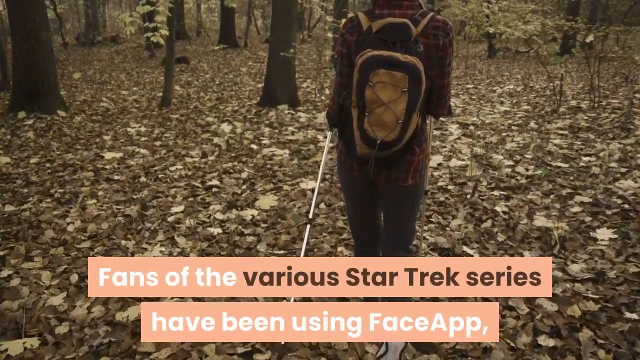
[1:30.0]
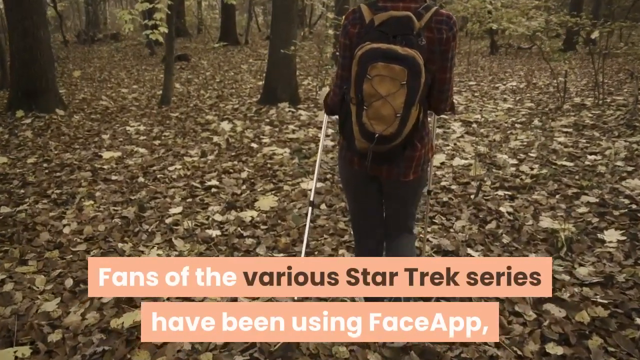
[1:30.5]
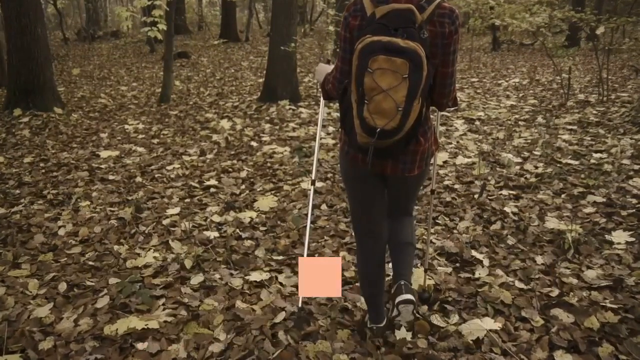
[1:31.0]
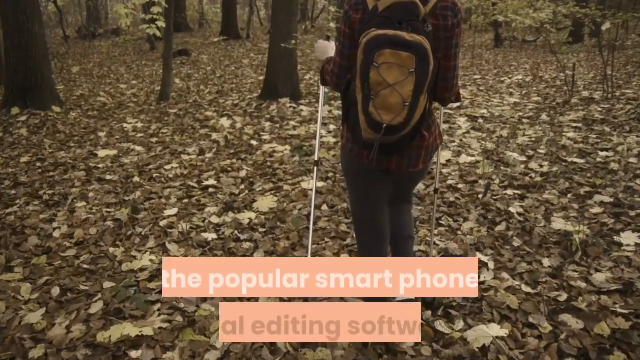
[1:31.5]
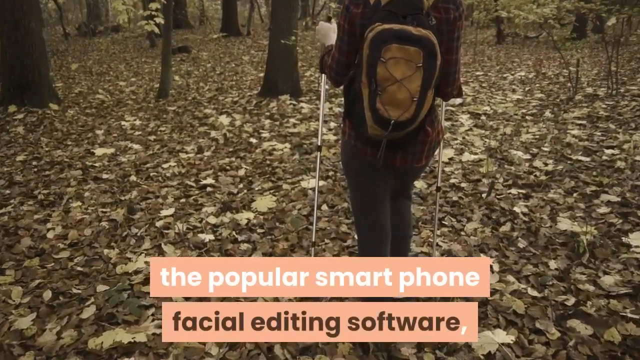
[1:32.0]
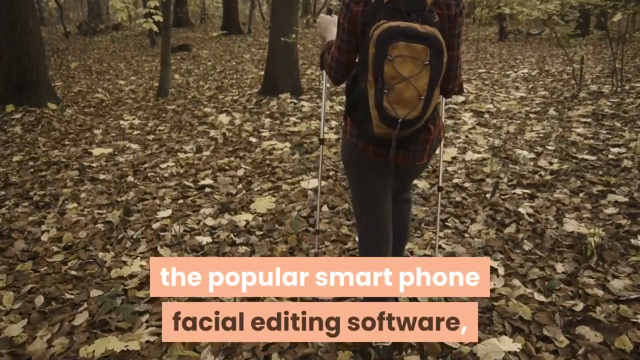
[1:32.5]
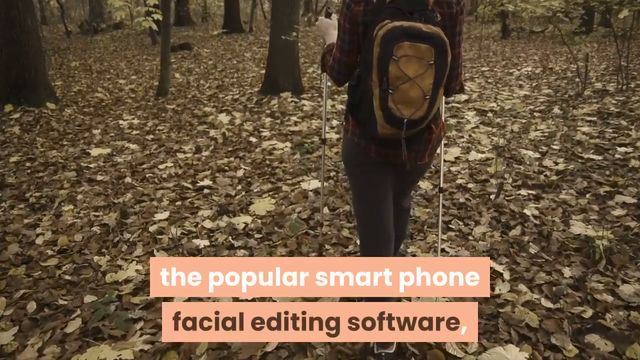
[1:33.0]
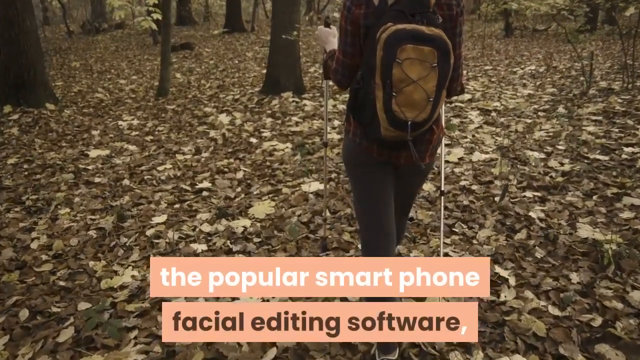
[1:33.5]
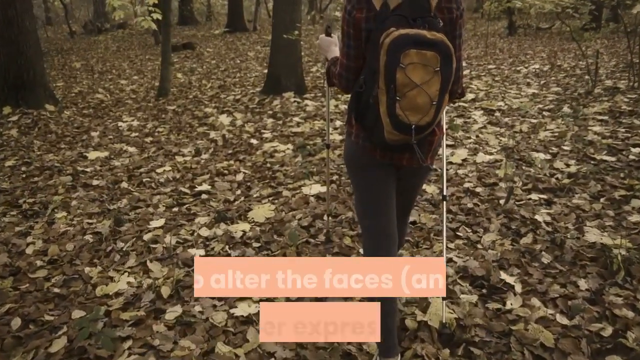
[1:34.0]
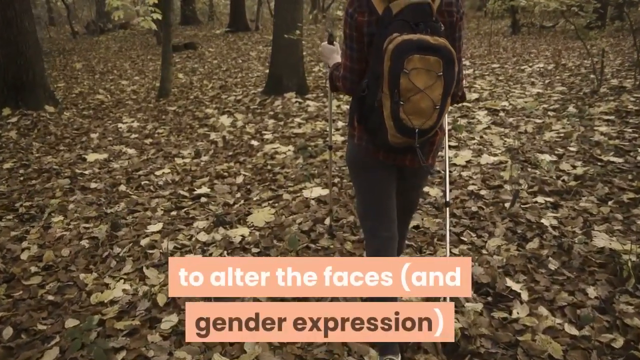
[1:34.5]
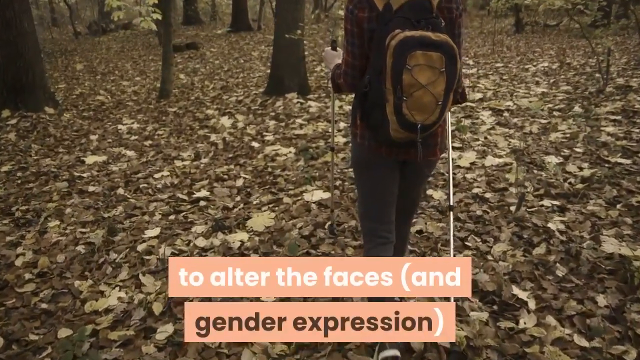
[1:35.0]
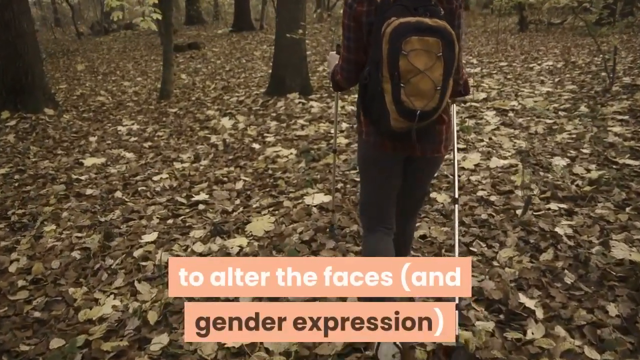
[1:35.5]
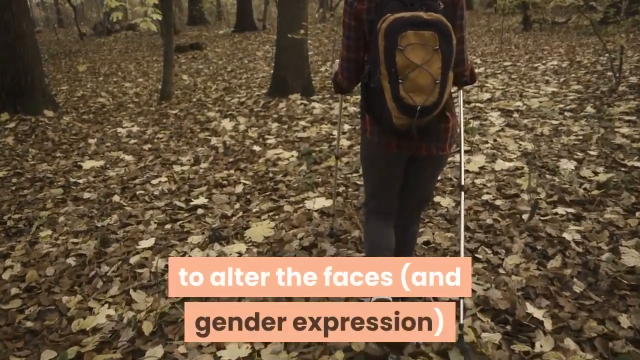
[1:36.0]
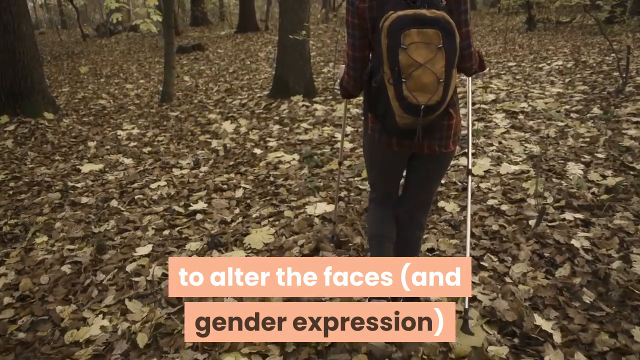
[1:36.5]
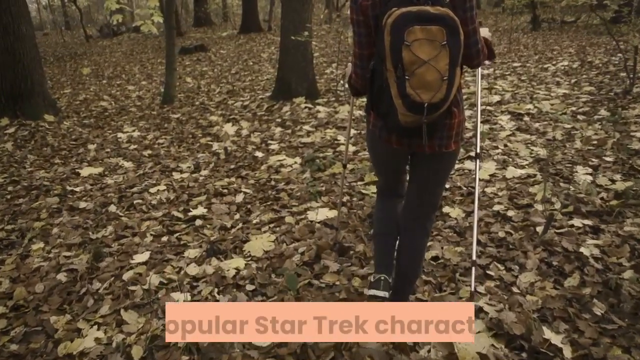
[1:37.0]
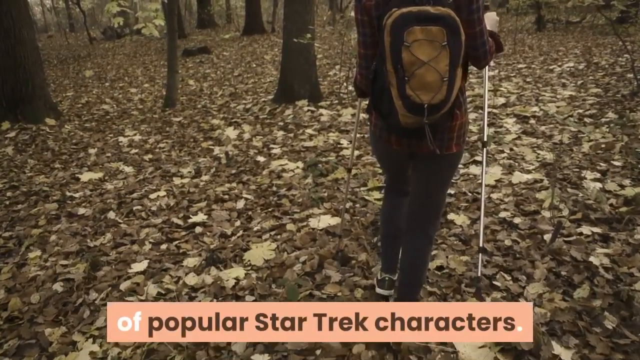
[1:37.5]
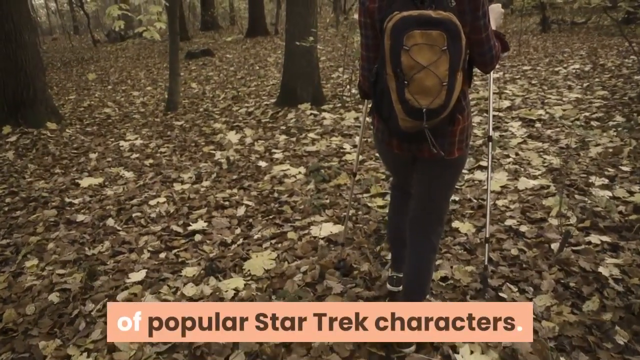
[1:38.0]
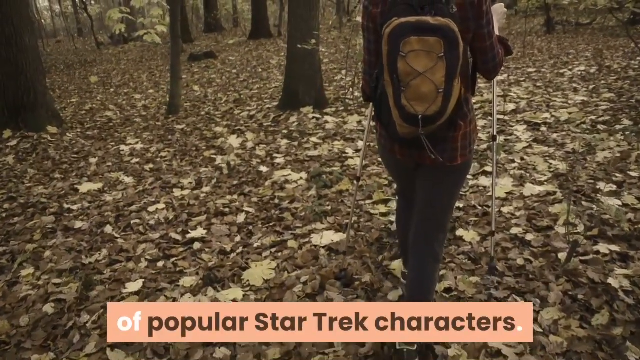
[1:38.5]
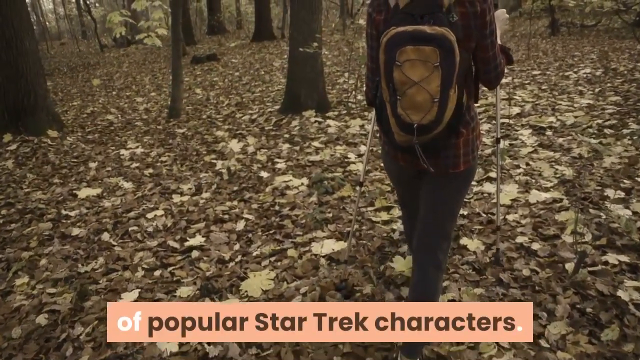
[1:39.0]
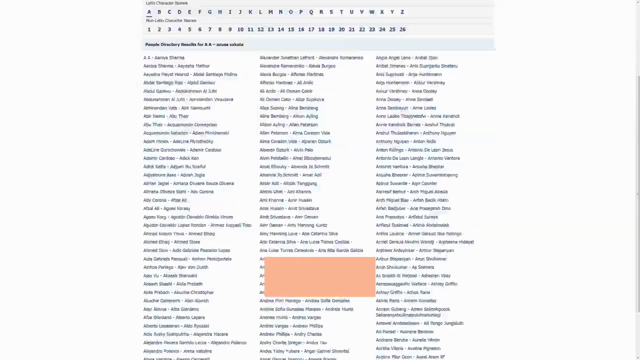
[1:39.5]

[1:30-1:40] A person hikes in the woods, with a leafy floor and trees. The person wears a checked shirt and a backpack and appears to be using a walking stick to help them walk through the leaves. The text continues: "fans of the various Star Trek series have been using Face App, the popular smartphone facial editing software, to alter the faces and gender expression of popular Star Trek characters." After a very quick movement, a Facebook screen is shown in the background. A banner at the top reads "Facebook Live", and a sign-in area at the top right shows that nobody is signed in. Beneath the banner is a video box of two women standing or sitting beside a laptop that appears to be an Apple laptop. Each woman has a glass beside her, and there are two screens on the wall behind them, one of which appears to show Facebook. Toward the left are options such as the number of views the live feed has. There is a link to Facebook mail. A box to the right reads "want to like or comment on this page", with what appears to be a sign-in option underneath. There is also a like option beside the Facebook Live video.